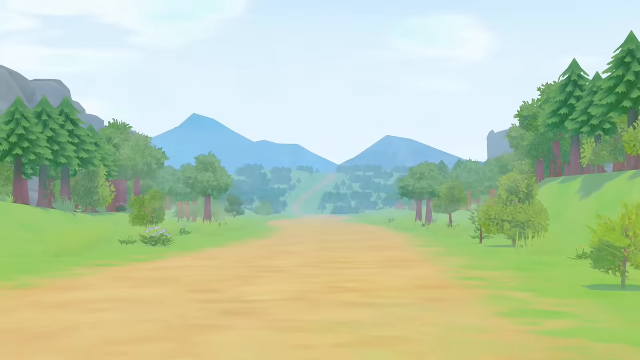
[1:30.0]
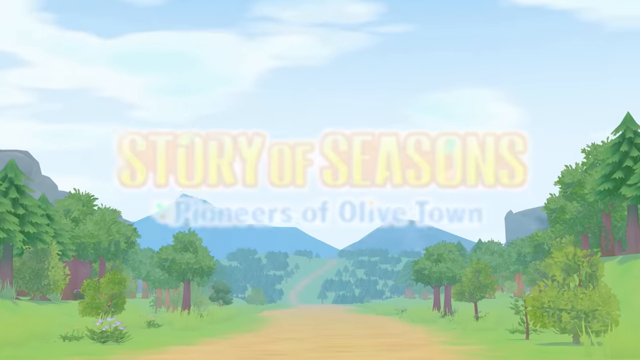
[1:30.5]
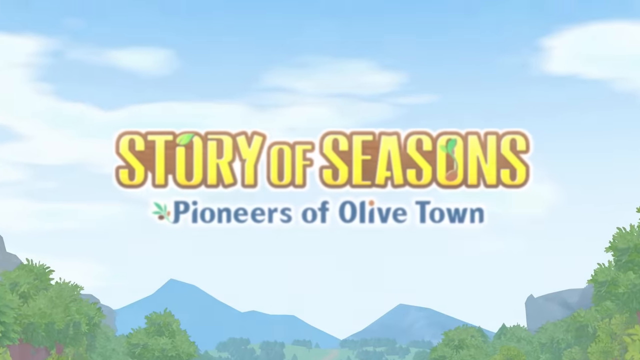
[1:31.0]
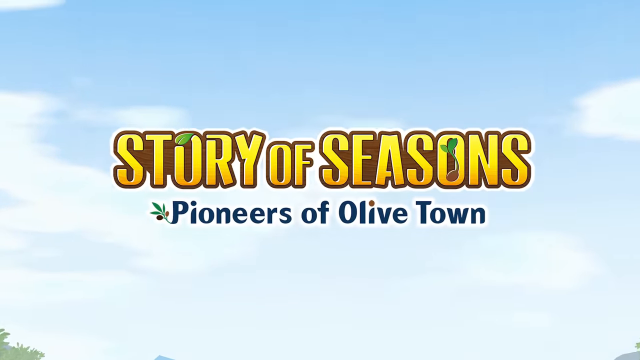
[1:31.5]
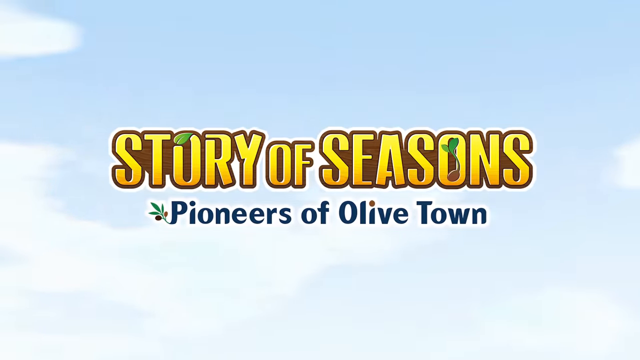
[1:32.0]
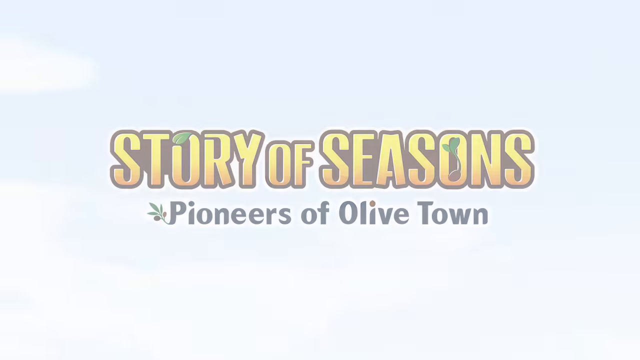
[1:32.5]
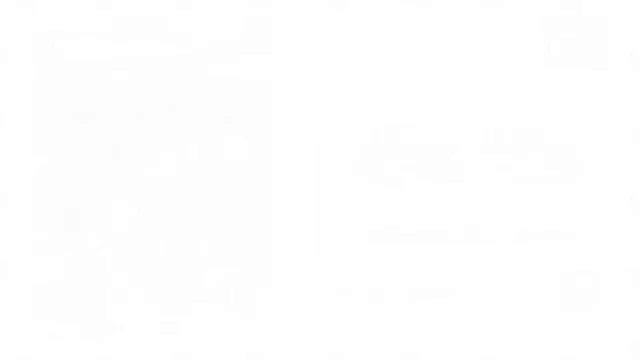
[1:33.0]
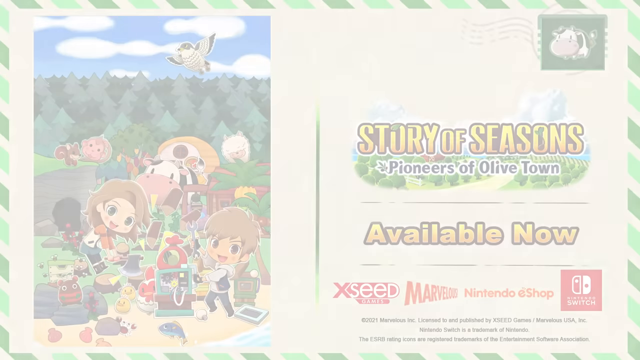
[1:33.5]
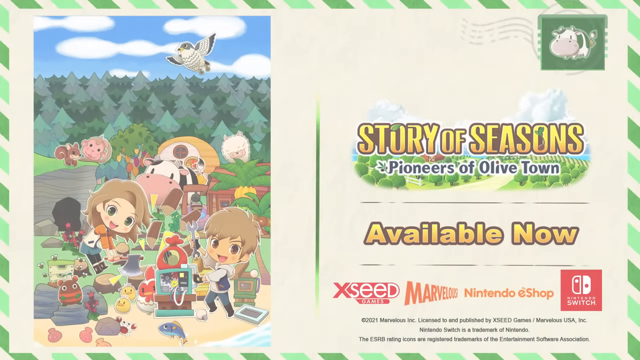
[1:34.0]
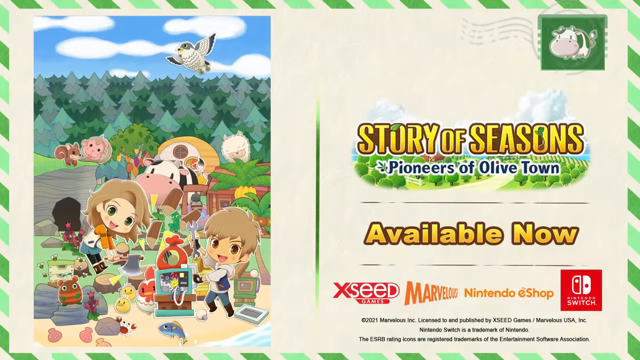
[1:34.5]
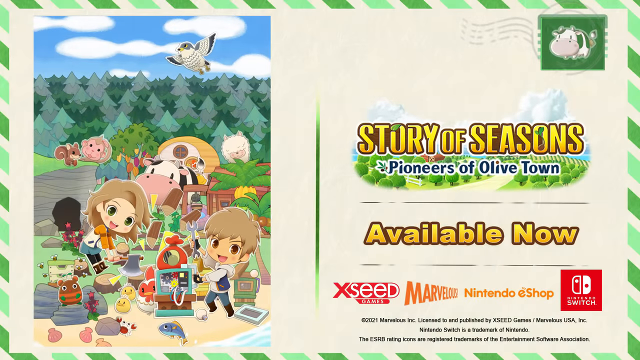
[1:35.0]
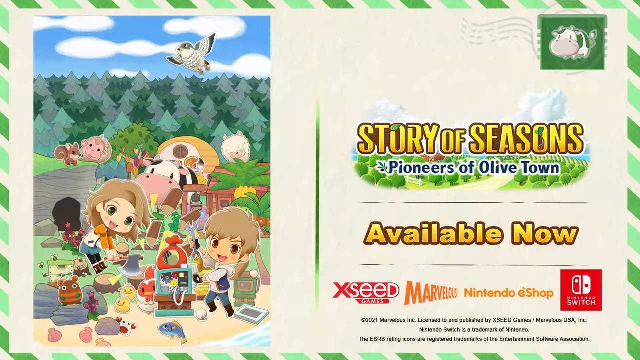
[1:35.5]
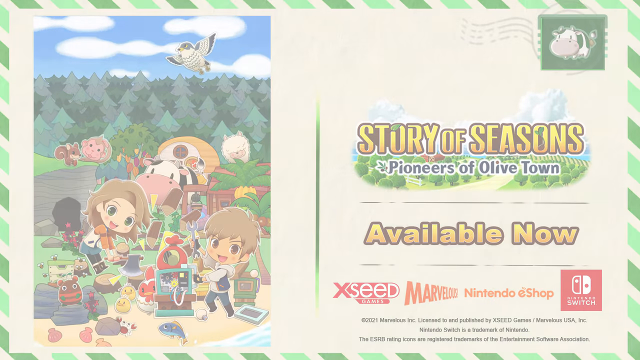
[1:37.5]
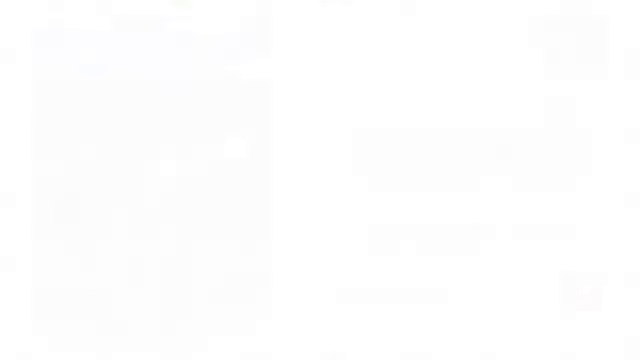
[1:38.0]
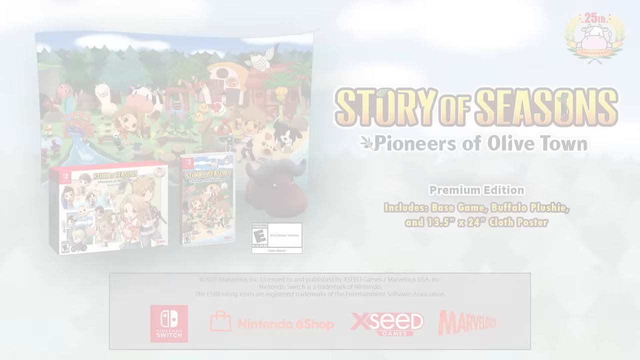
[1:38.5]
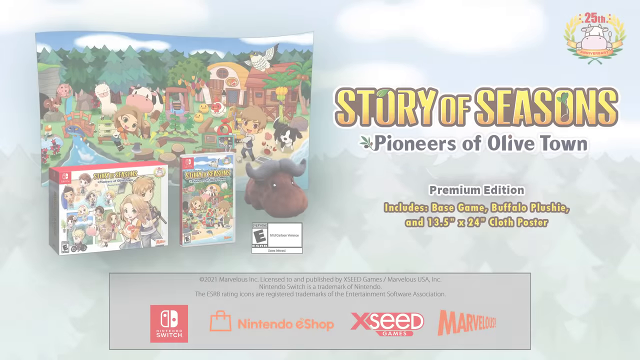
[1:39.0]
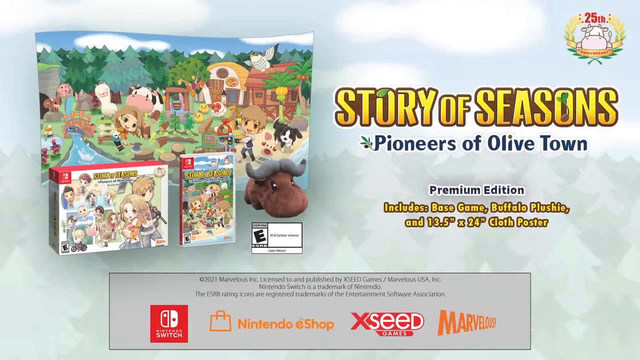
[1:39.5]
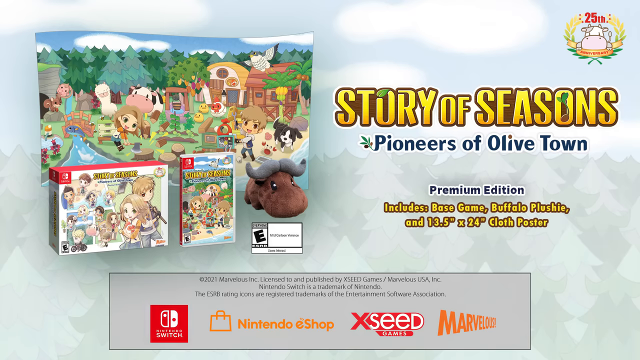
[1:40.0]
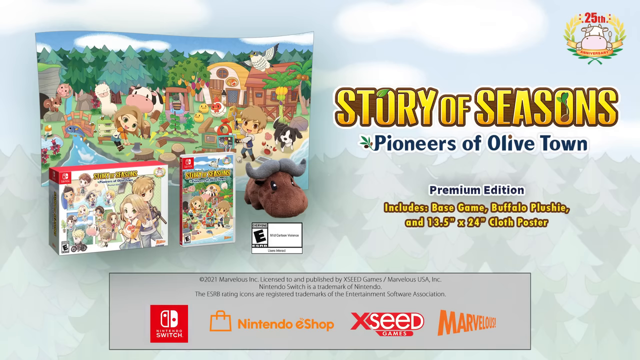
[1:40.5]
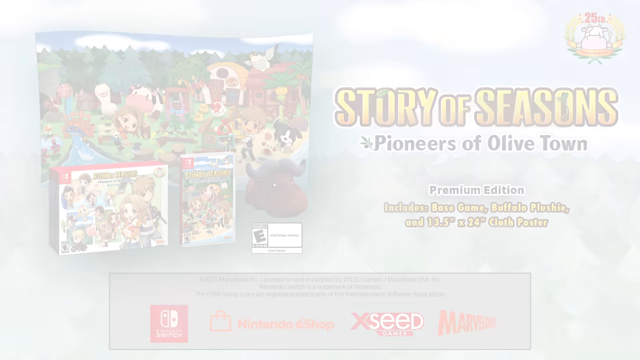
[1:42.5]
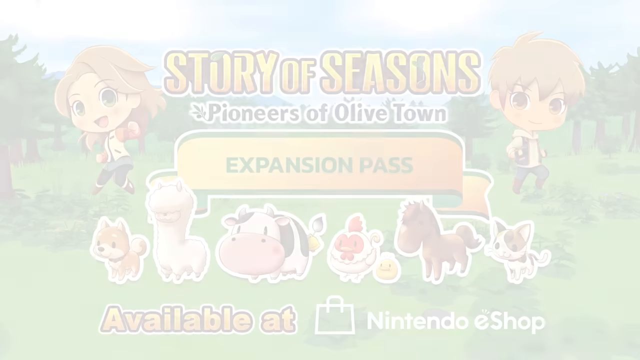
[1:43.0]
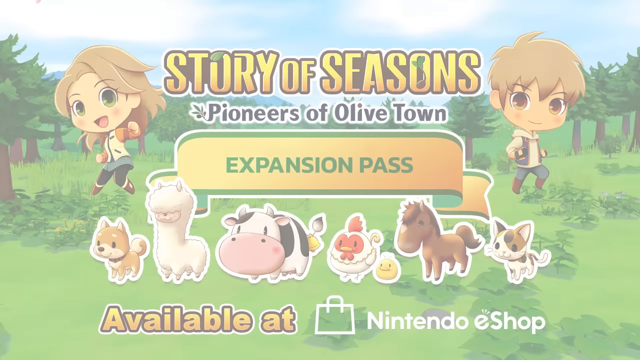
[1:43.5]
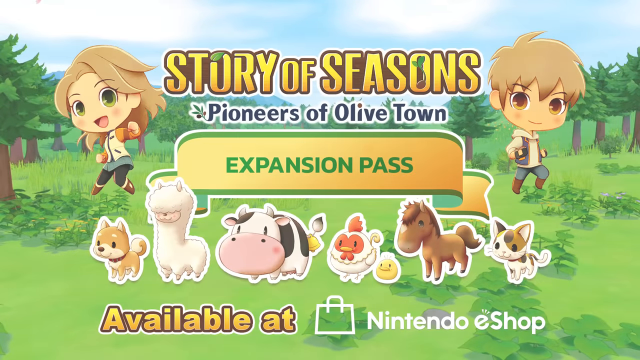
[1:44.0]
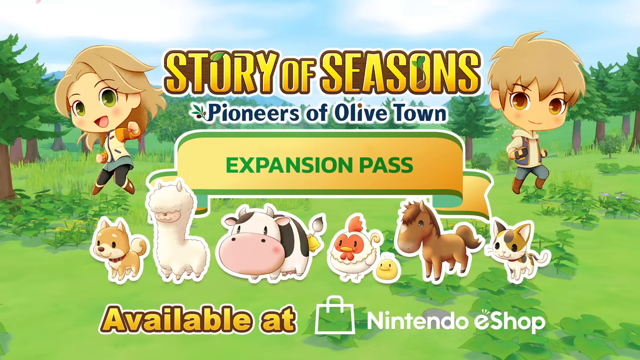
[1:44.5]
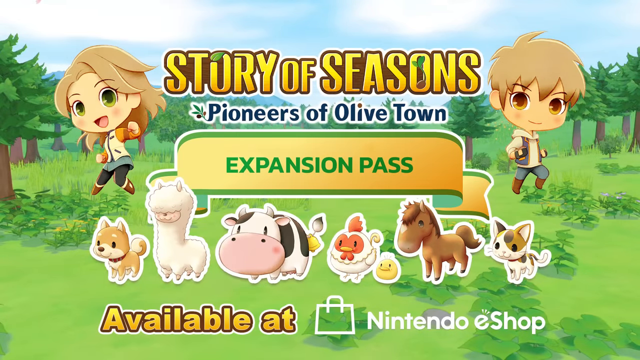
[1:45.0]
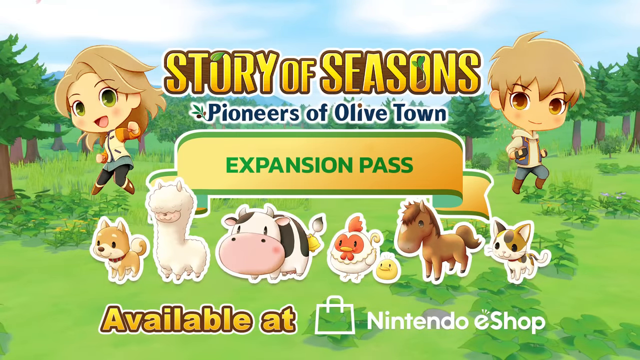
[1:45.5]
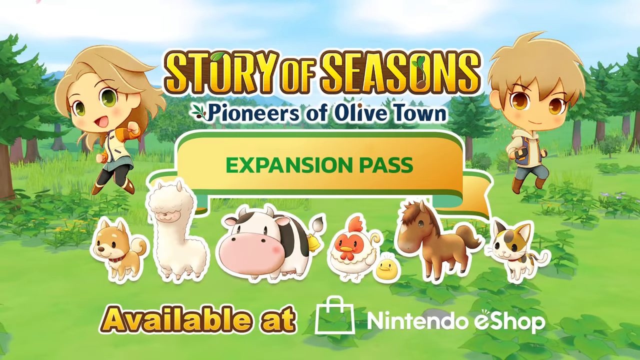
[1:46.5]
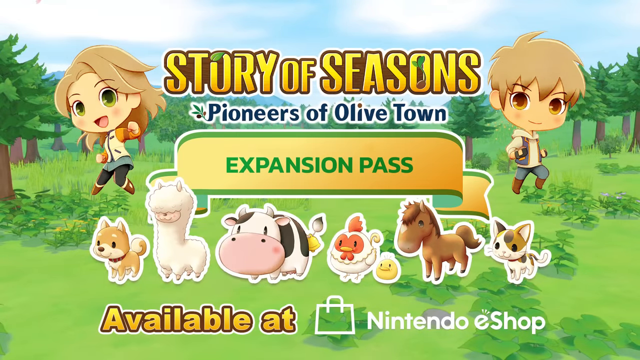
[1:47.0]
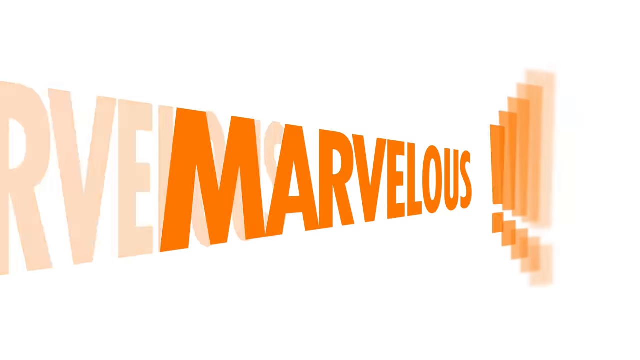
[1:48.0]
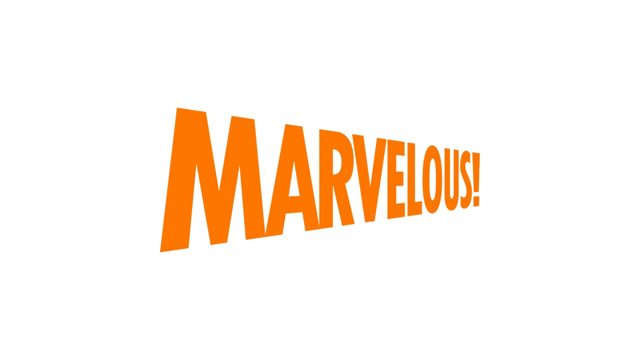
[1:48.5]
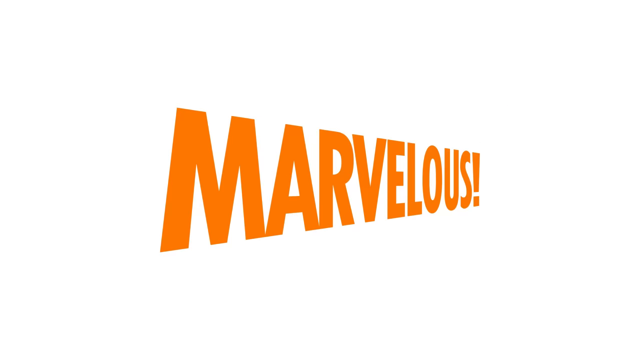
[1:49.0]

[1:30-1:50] The video ends by revealing the game's name, Story of Seasons, with Olive Town as the final part of the title.